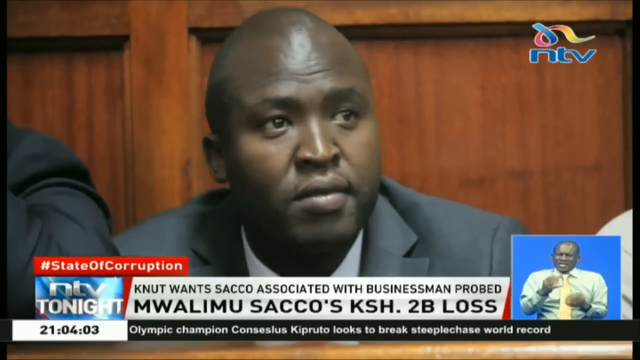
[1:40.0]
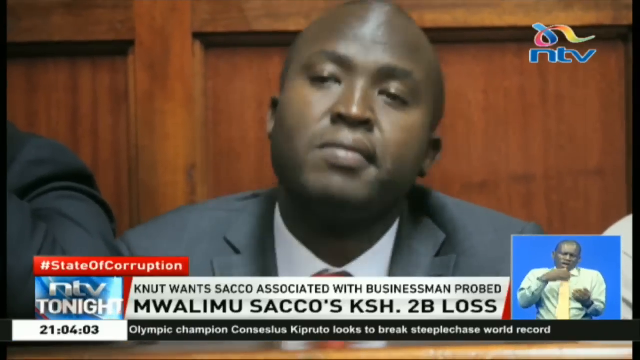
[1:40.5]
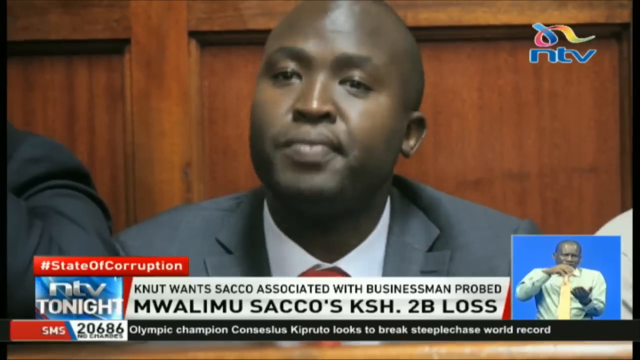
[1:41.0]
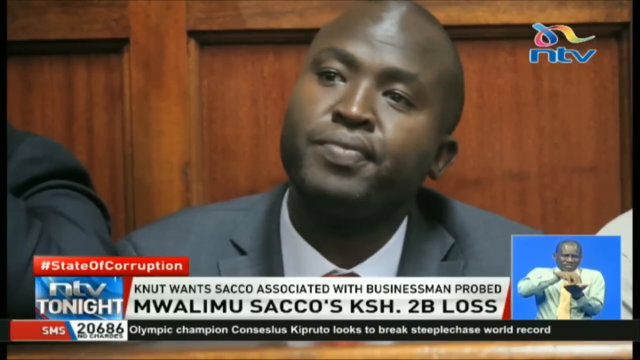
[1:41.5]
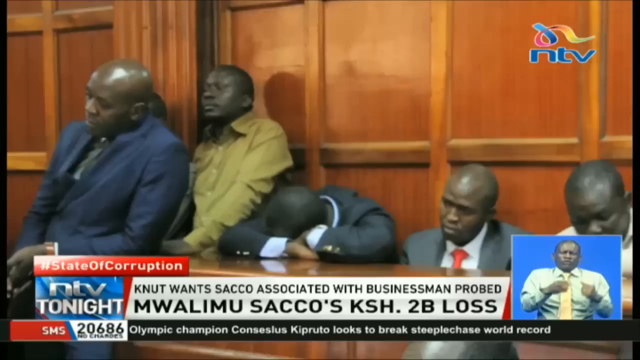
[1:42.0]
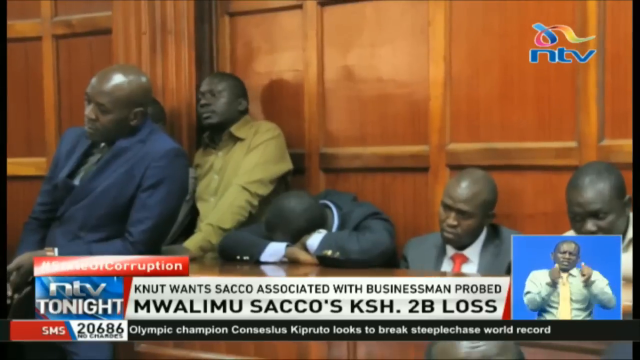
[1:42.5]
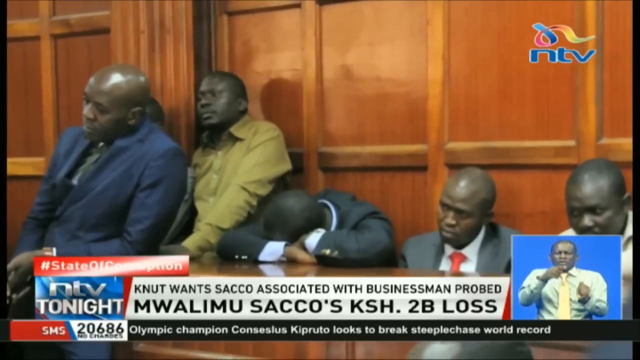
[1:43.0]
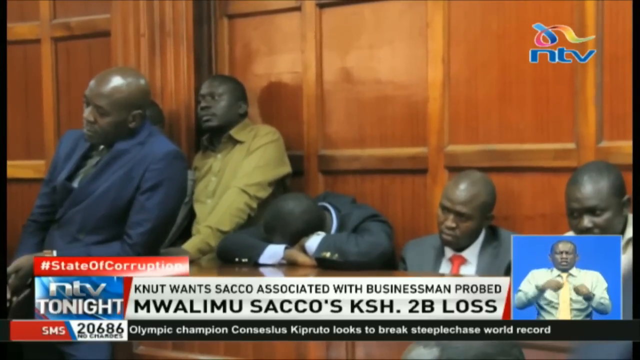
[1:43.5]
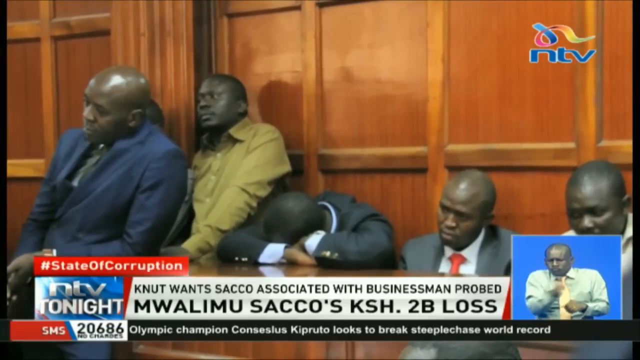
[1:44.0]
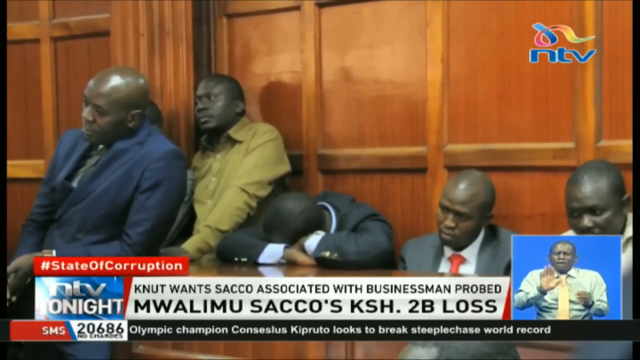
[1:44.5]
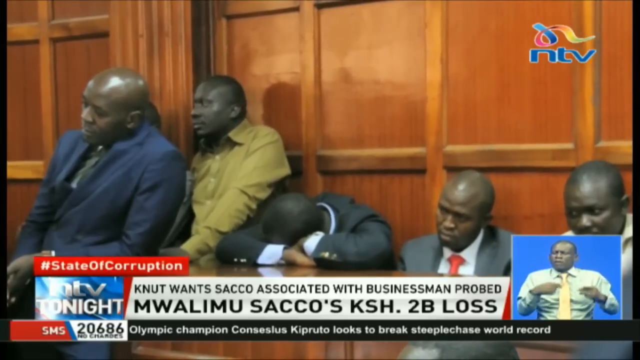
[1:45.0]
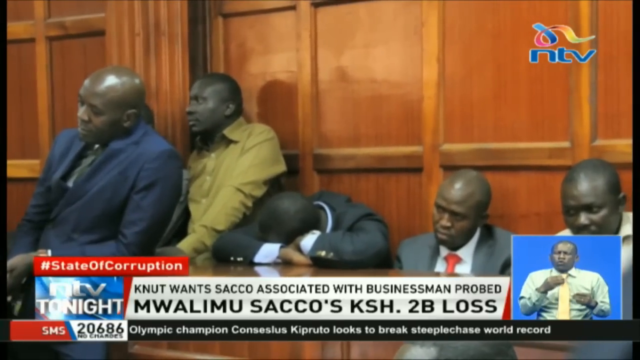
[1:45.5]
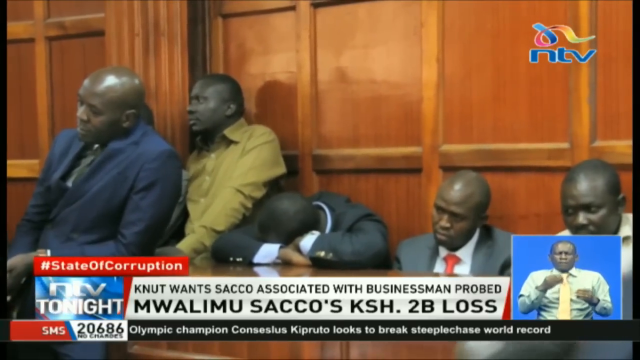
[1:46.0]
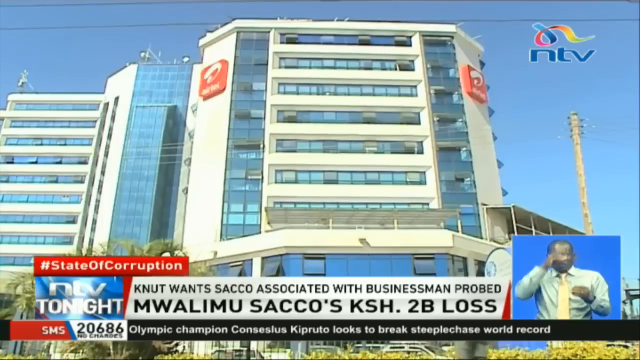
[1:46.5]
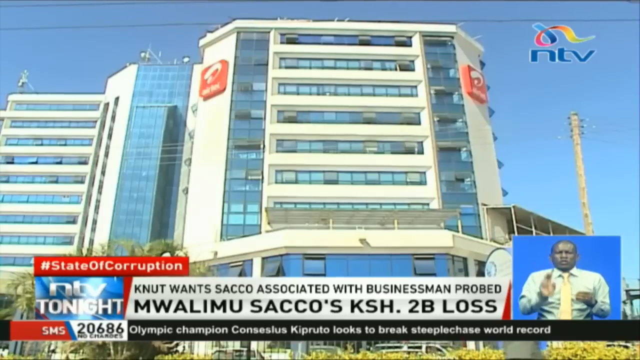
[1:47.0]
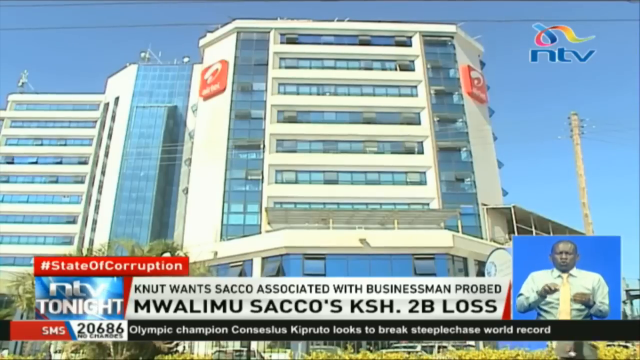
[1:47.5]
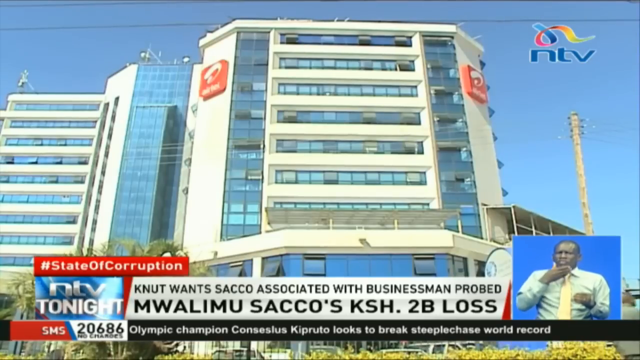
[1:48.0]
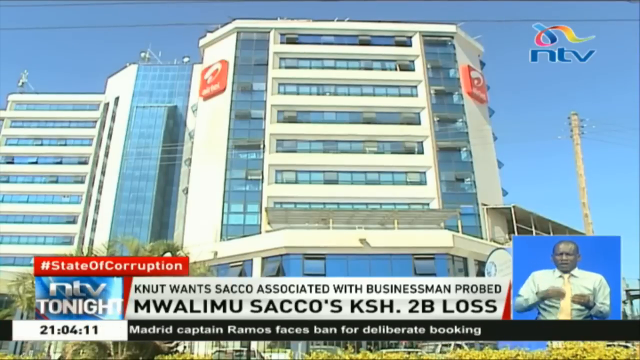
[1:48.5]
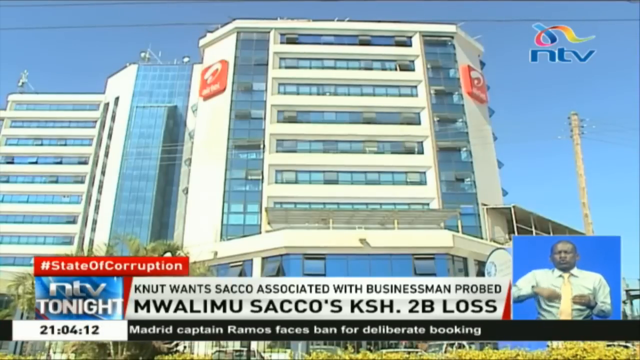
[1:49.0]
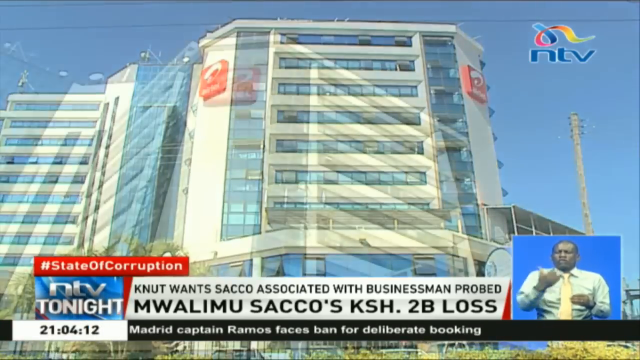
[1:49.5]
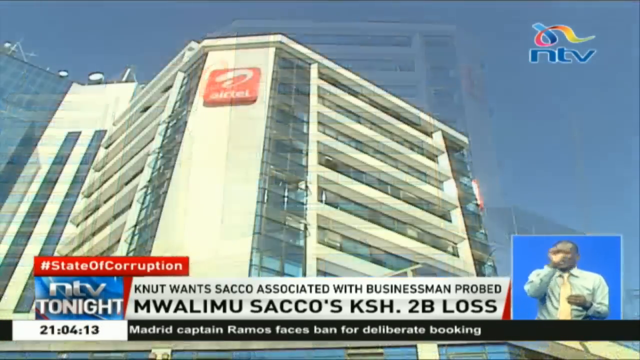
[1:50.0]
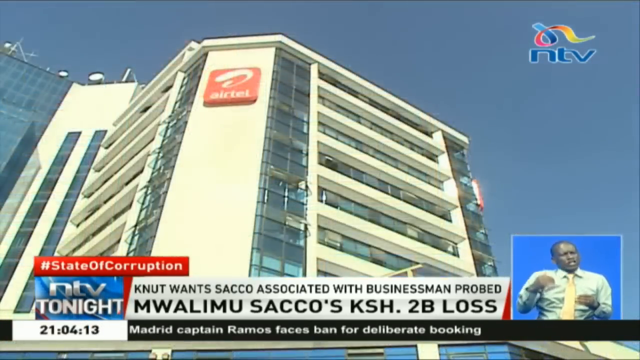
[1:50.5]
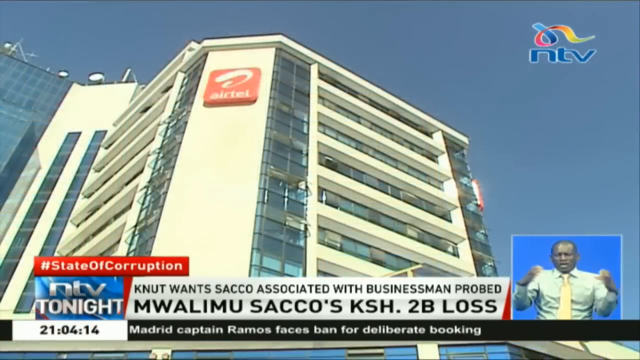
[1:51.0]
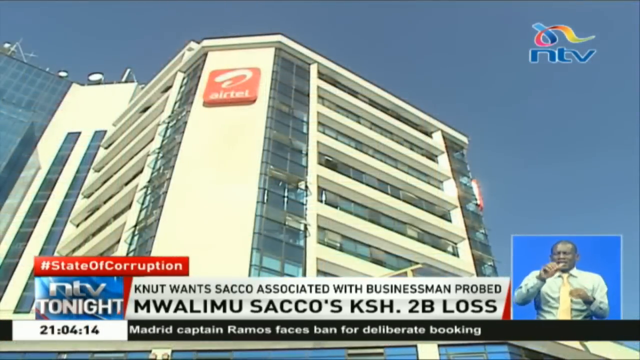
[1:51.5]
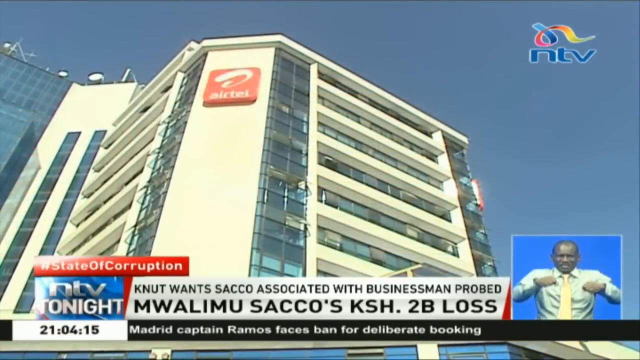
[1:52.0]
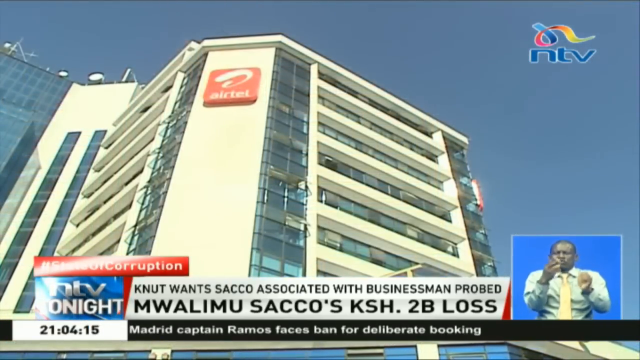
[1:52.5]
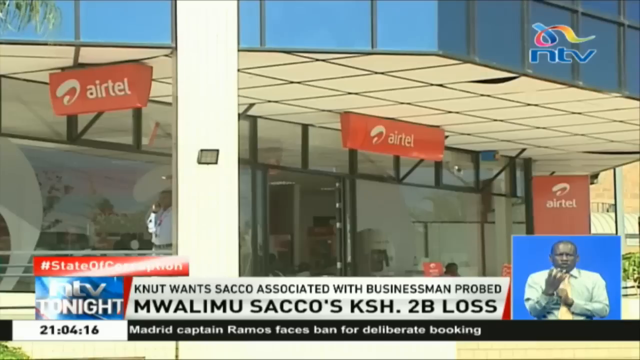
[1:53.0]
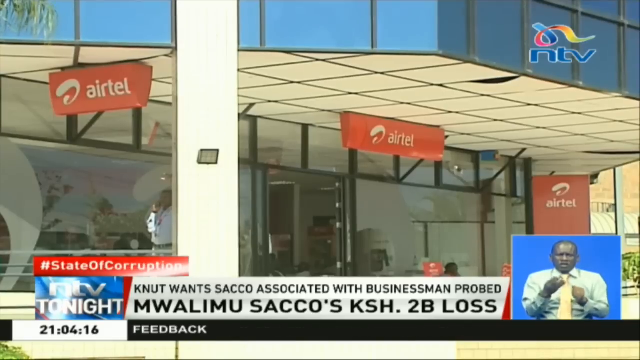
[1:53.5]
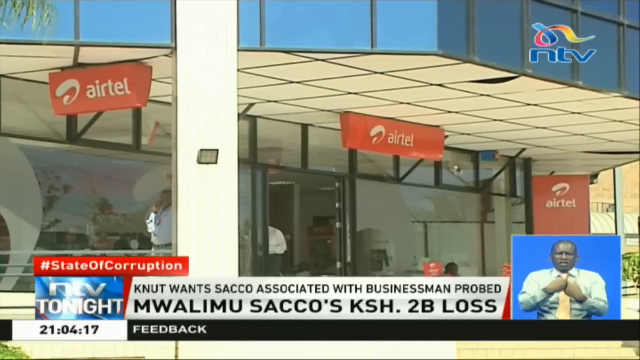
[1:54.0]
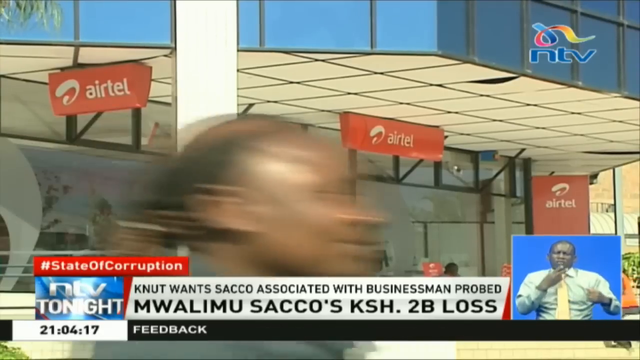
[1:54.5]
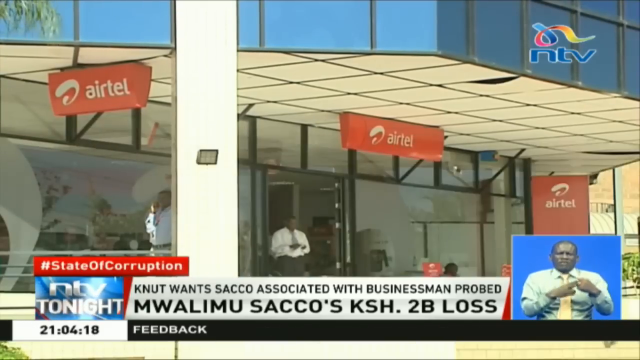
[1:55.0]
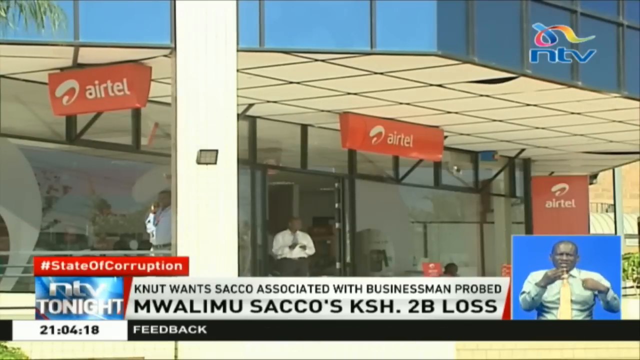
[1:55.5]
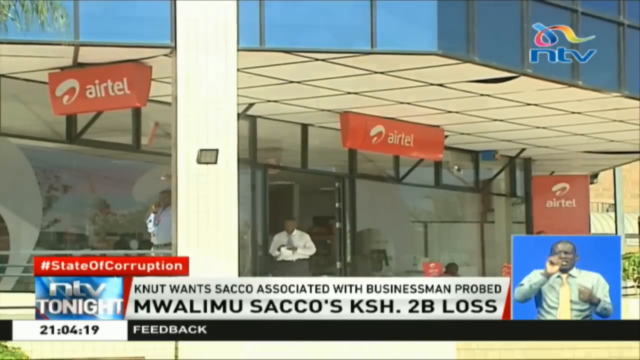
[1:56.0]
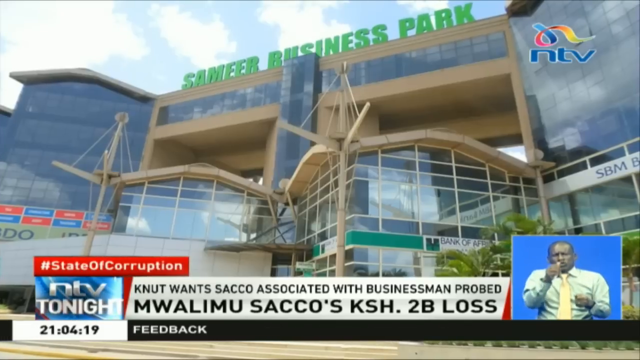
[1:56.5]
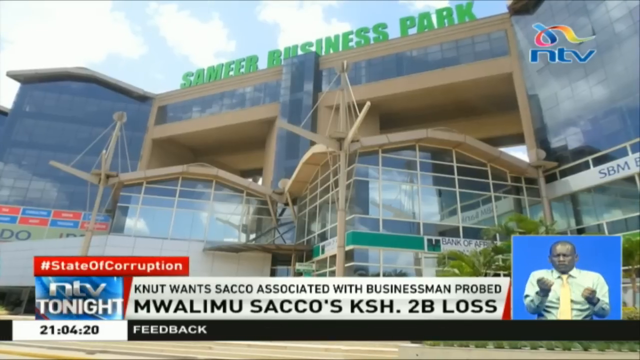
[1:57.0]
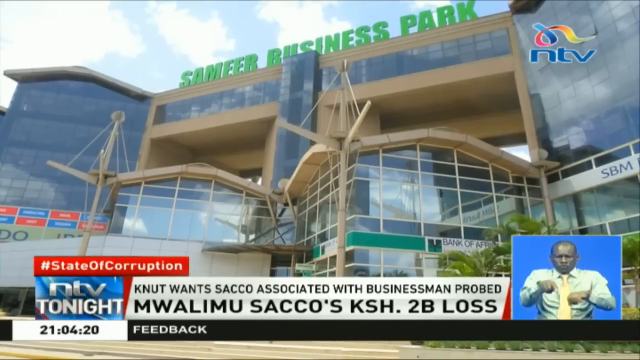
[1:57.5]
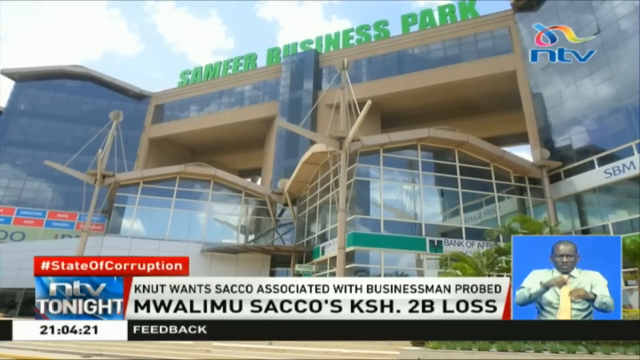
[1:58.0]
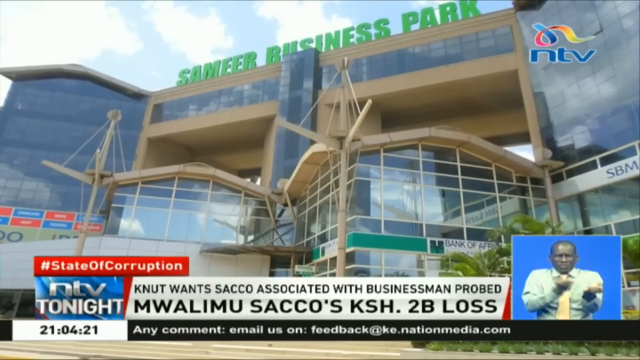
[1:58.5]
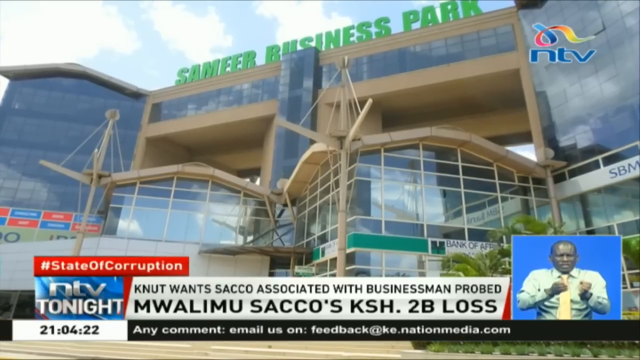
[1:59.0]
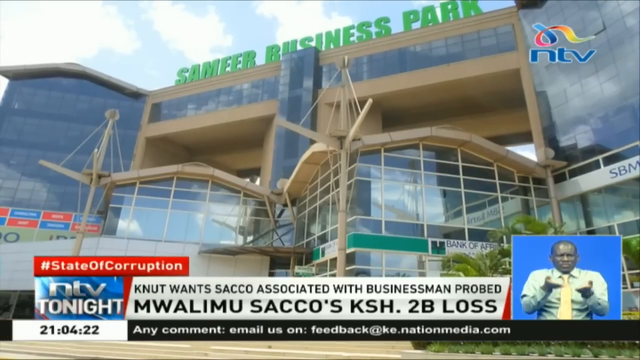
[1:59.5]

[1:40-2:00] The lower part of the screen shows "corruption" with "NTV tonight" beneath it. To the right, a headline in black letters on a white background reads "KNUT wants SACO associated with businessman probed", and beneath it "MWALIMU SACCO's KSH 2 billion loss". To the right of that, a man in his 50s wearing a long white shirt and yellow tie signs for the hearing impaired against a blue background. Beneath it, a sports headline begins "Olympic champion" and ends "looks to break steeplechase world record". The man on screen appears to be in a courtroom; he looks to be in his mid-30s, African, with medium skin, dark eyes and no hair, wearing a gray suit, a white shirt and a red tie. Next, a group of people appears, one of whom has his head between his hands; they seem to be in an official courtroom setting. The view then shows a high-rise building with what looks like "AIRTEL" at the top.